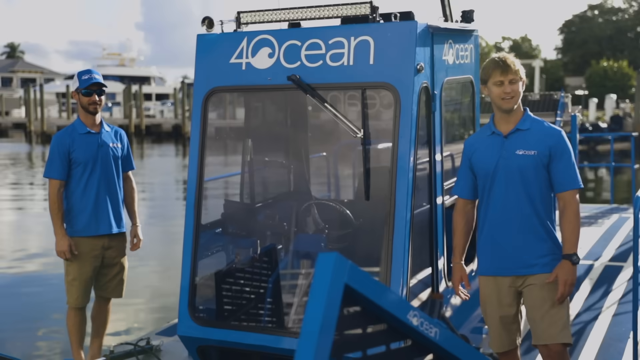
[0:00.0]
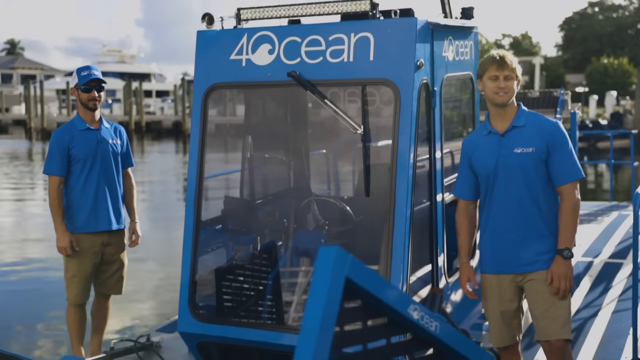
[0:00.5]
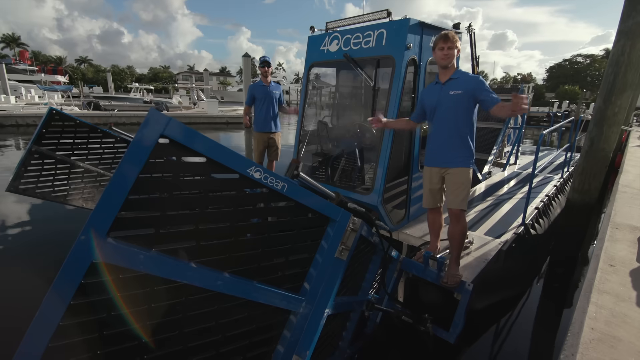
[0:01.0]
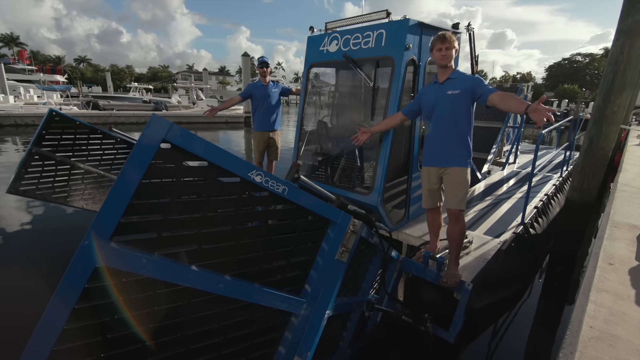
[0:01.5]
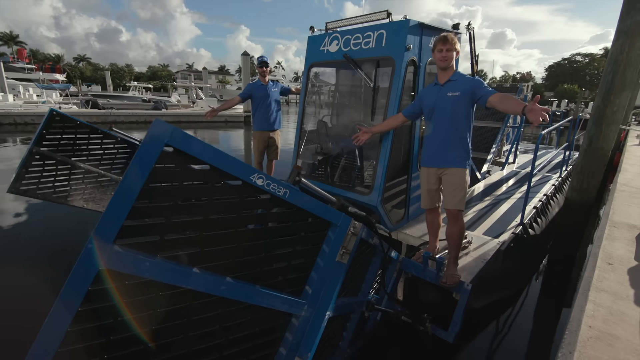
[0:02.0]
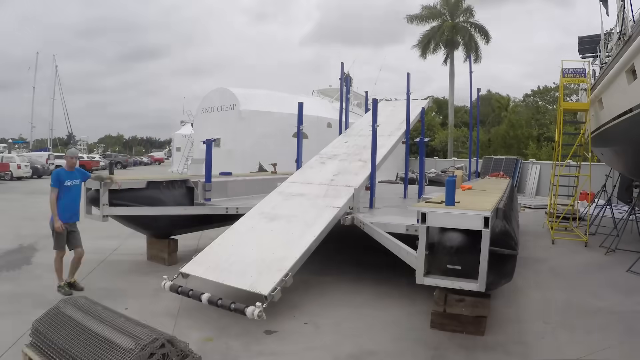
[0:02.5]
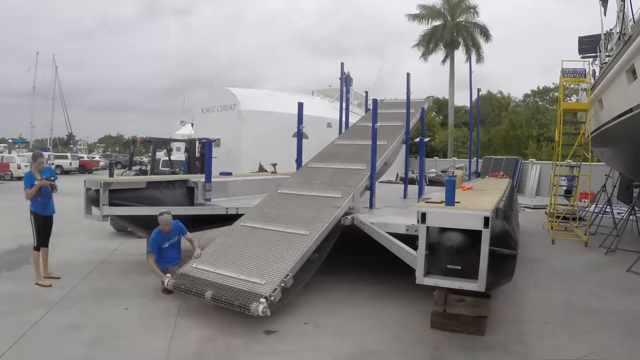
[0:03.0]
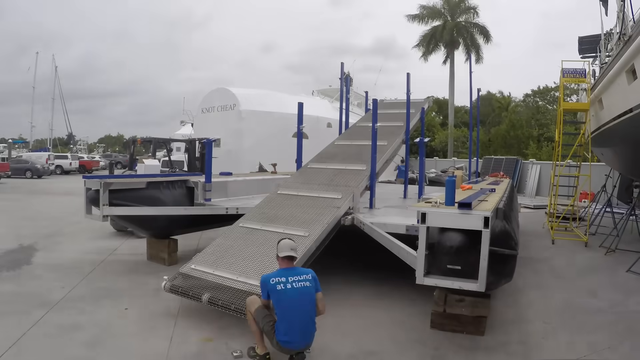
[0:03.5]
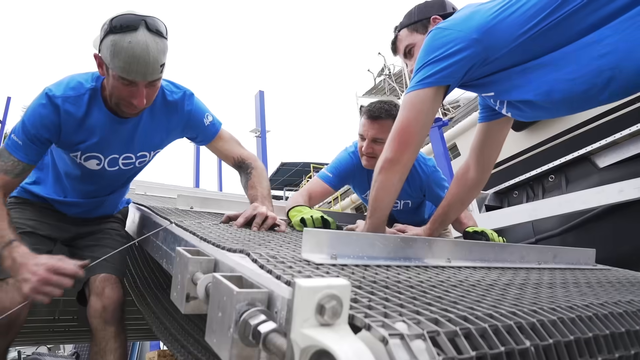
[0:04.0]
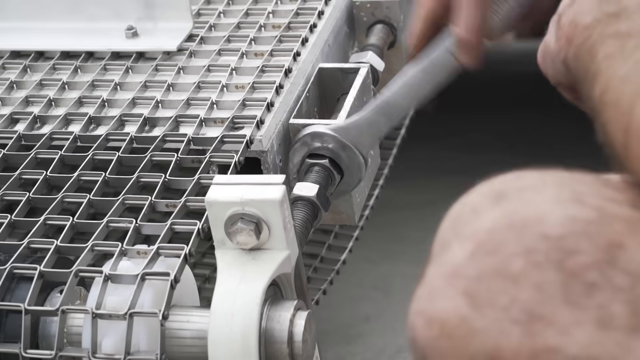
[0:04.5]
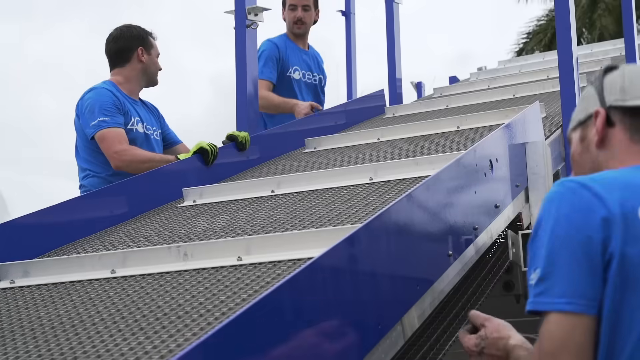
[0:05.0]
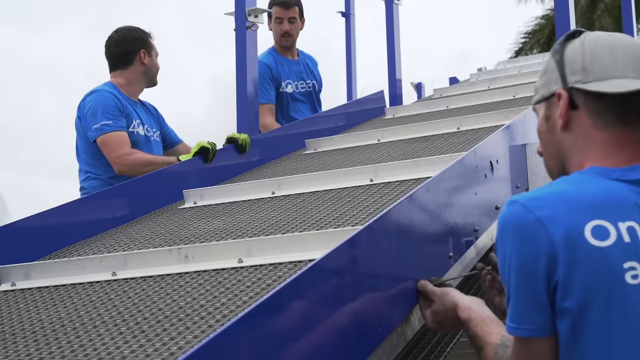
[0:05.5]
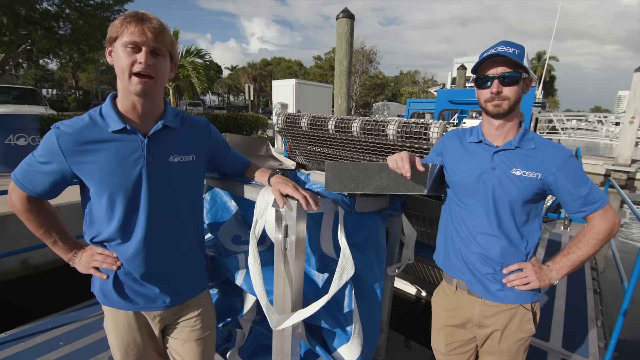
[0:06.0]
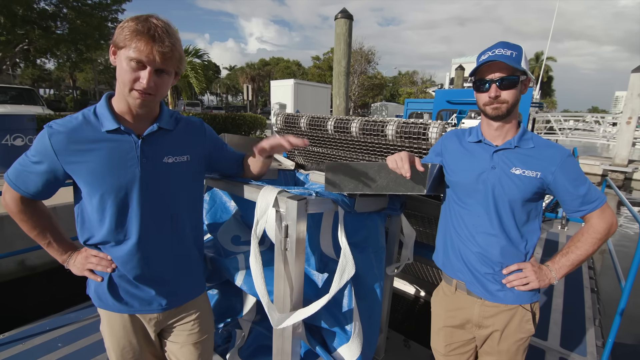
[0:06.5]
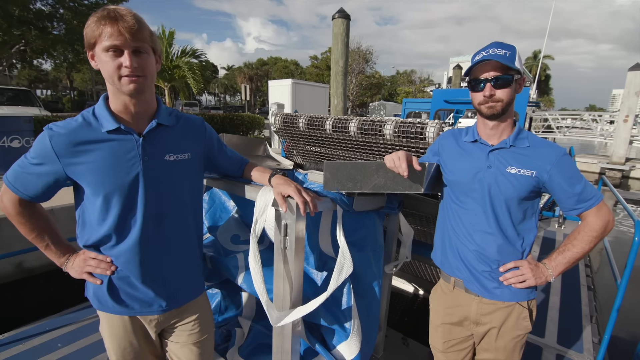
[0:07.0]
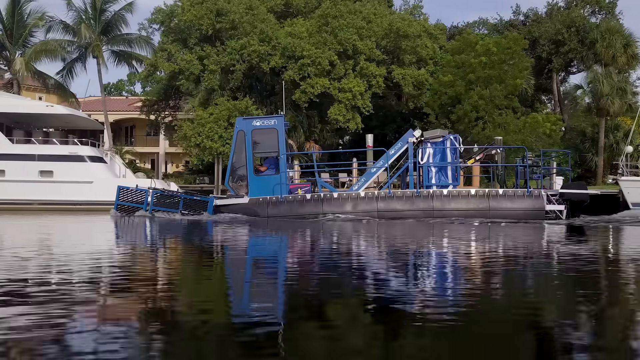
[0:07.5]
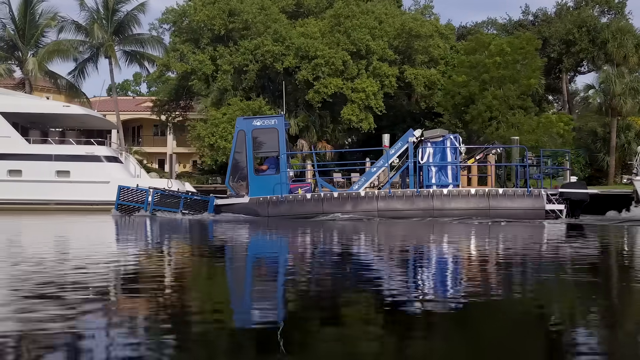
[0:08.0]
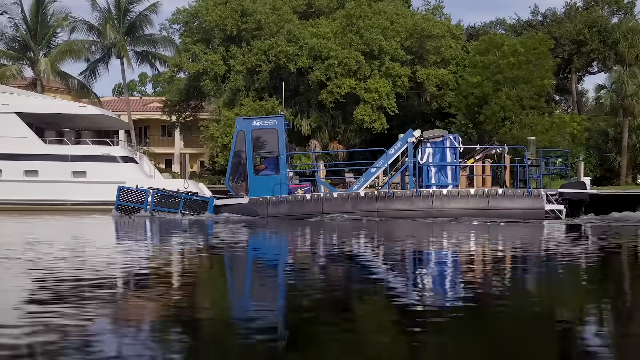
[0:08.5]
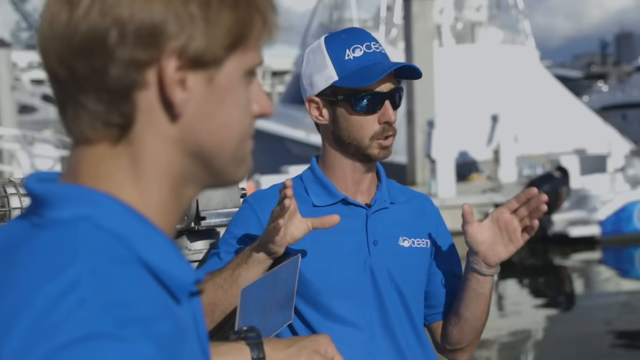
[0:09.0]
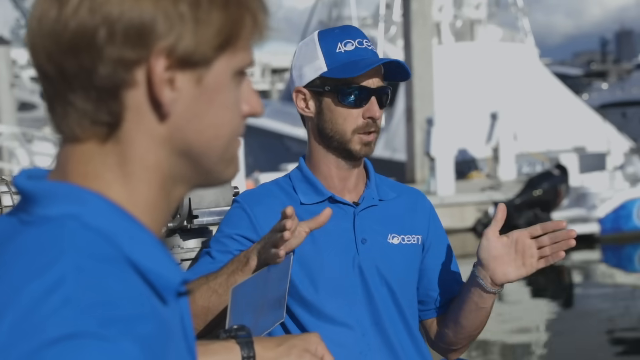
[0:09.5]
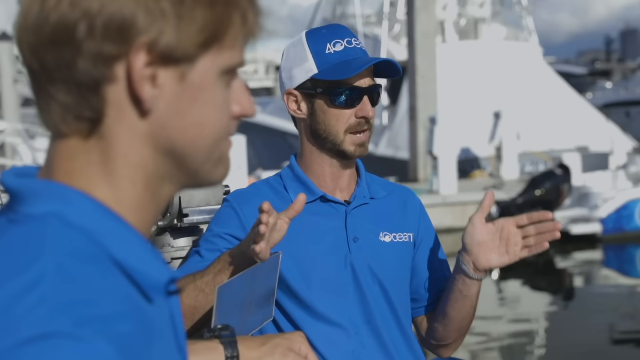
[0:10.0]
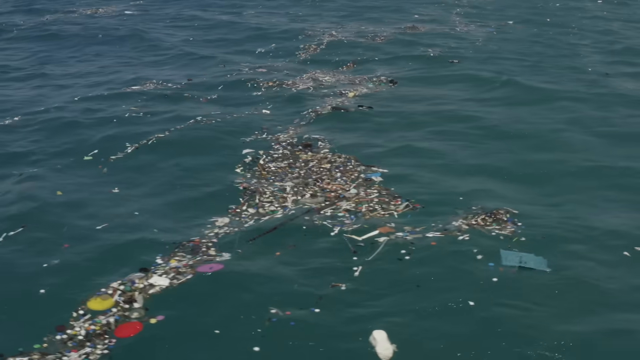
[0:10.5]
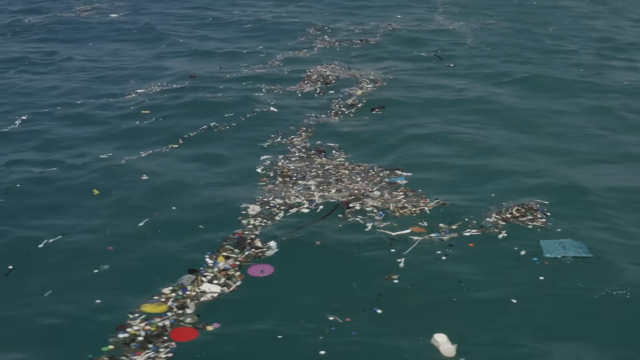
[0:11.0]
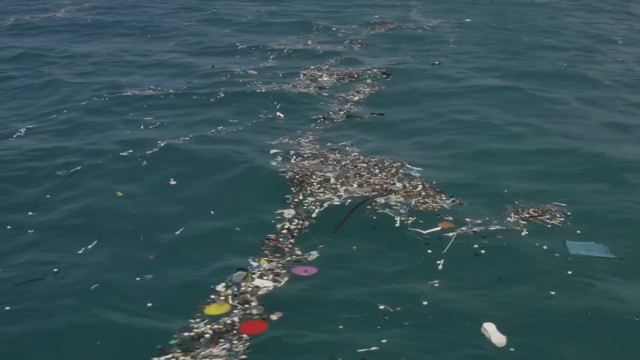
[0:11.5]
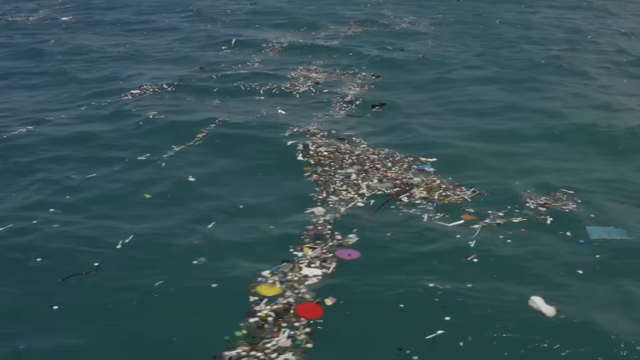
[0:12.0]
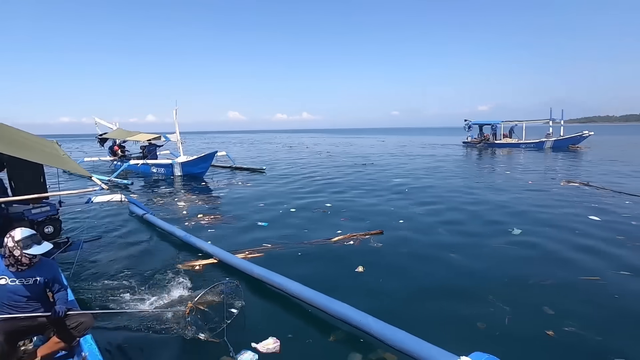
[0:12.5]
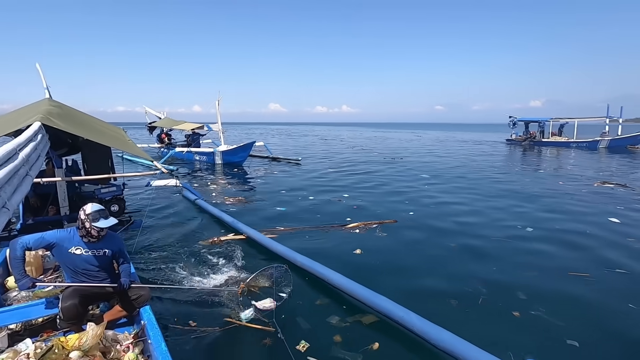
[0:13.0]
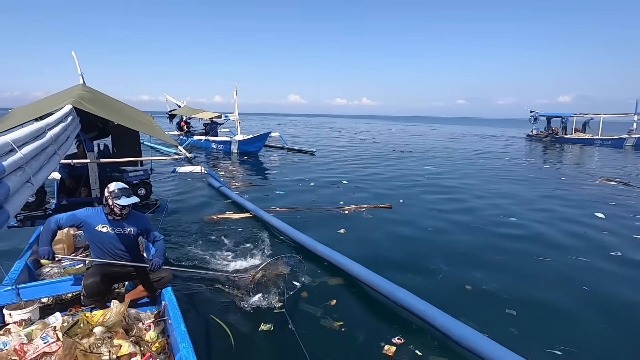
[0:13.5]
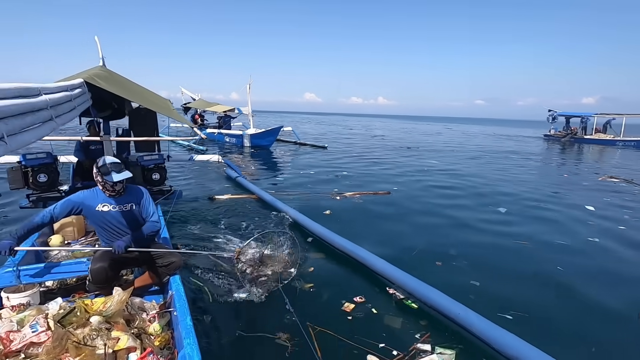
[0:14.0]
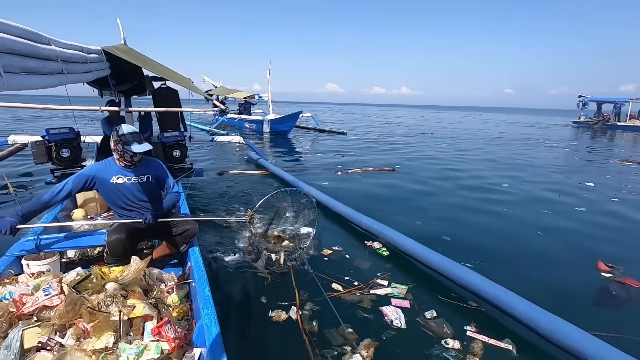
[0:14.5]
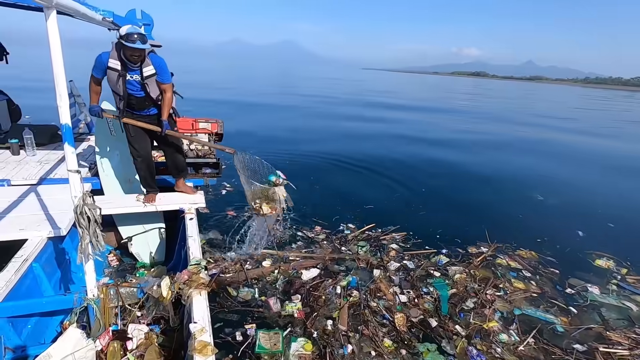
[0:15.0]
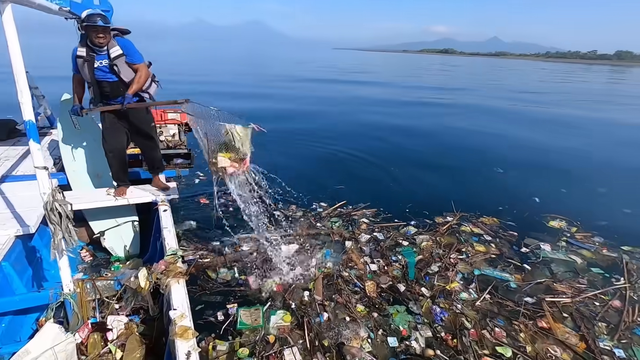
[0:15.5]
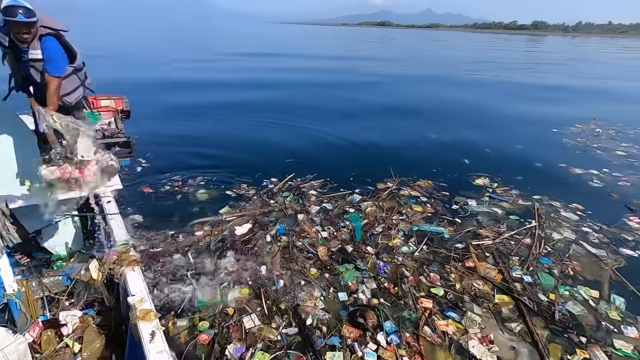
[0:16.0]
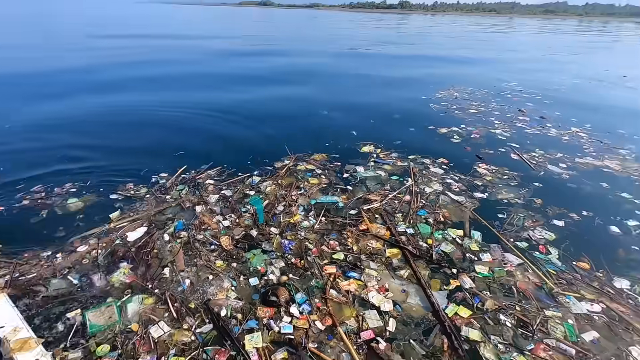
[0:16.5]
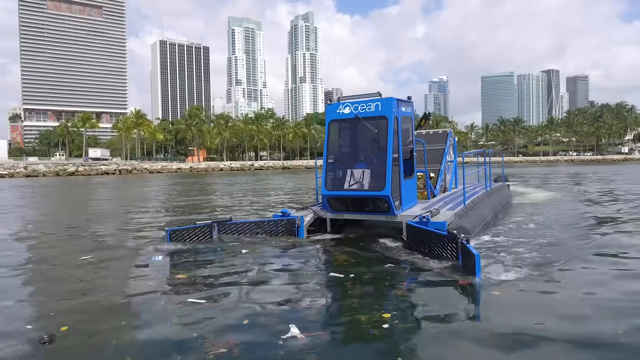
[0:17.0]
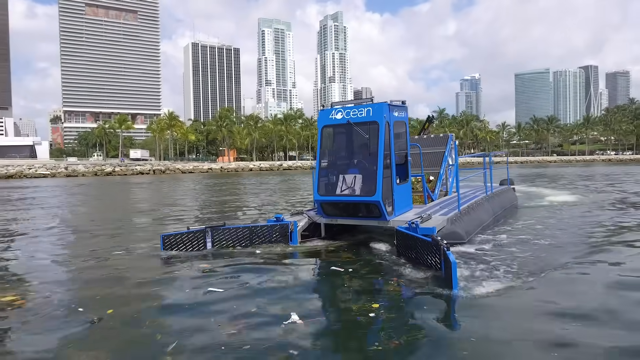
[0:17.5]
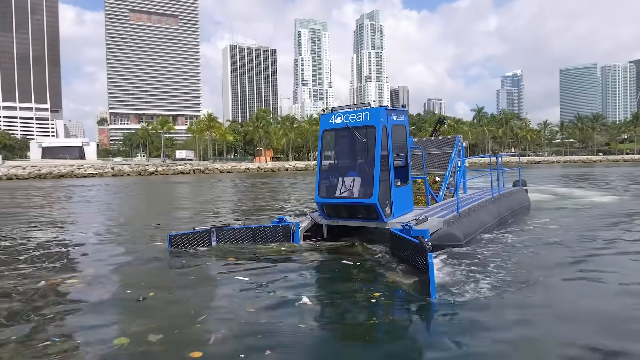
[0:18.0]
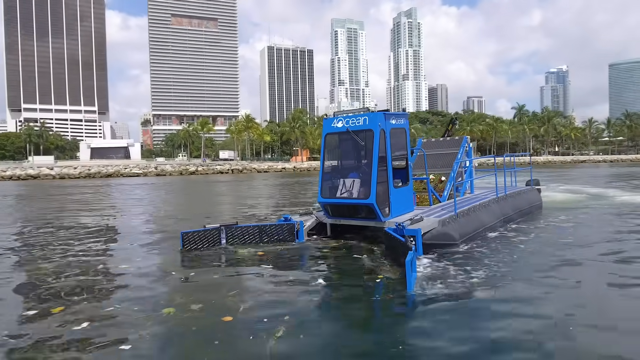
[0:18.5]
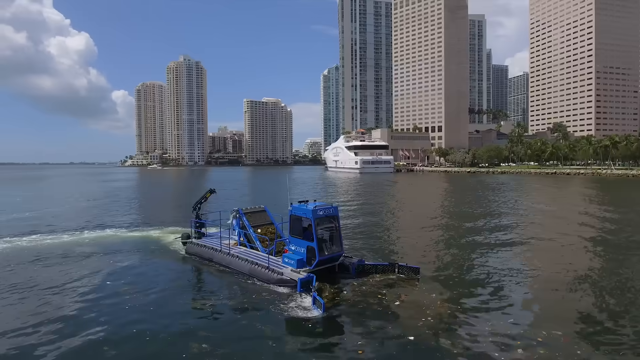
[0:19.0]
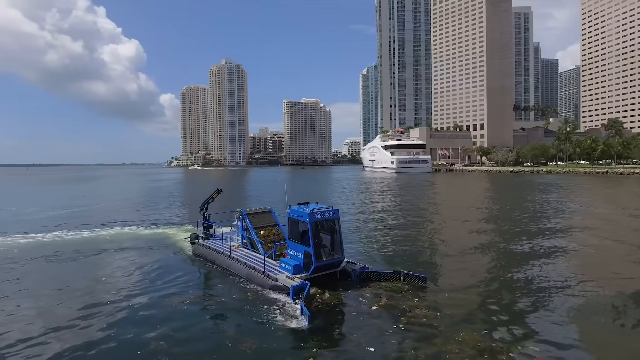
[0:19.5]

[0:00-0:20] A blue machine is in the water, with white writing along its top showing the number 4 followed by the word "ocean". On the left side of the machine a man is standing; he wears a blue short-sleeved collared shirt, a blue hat and tan shorts. On the right of the machine is another man with blonde hair, wearing a short-sleeved blue collared shirt and tan shorts. The video then cuts to the two of them putting together the same machine, fitting a slide onto it as they build it. Next comes a shot of the ocean with a lot of trash floating on the surface of the water. Then they are out in the ocean on the blue machine, which has a large claw at the front that clenches trash inside it as they collect trash floating in the ocean.